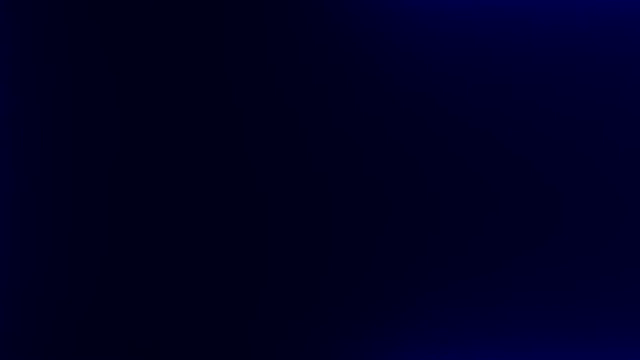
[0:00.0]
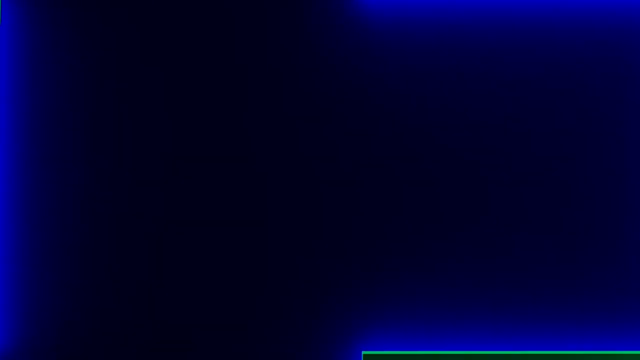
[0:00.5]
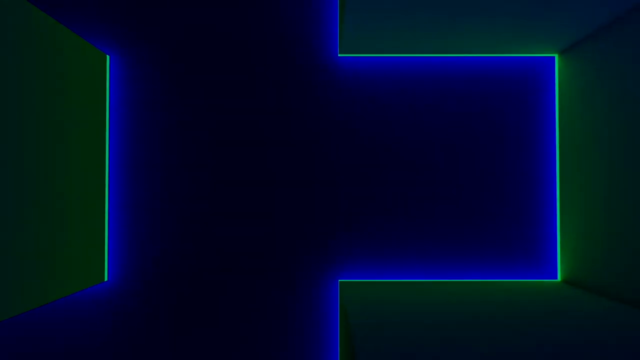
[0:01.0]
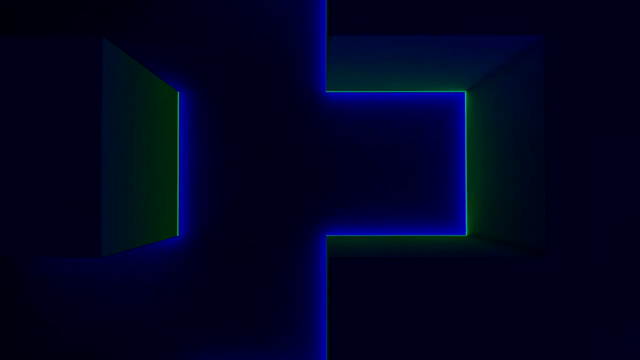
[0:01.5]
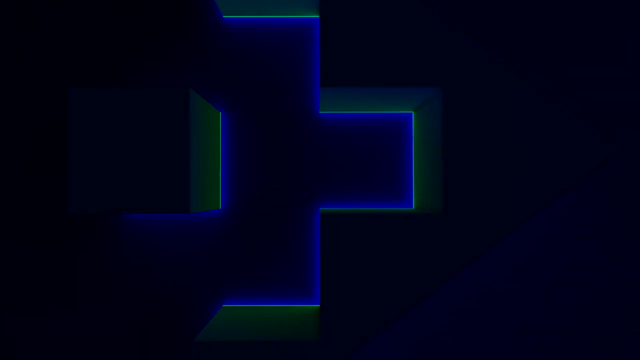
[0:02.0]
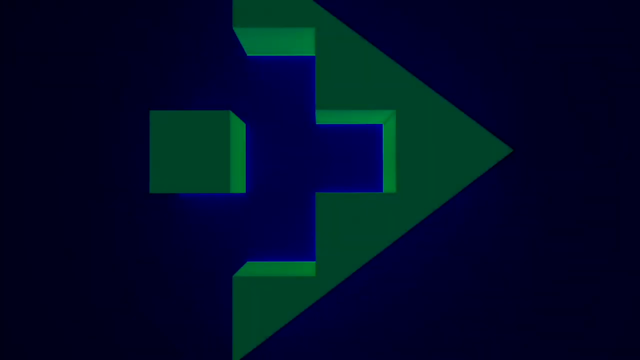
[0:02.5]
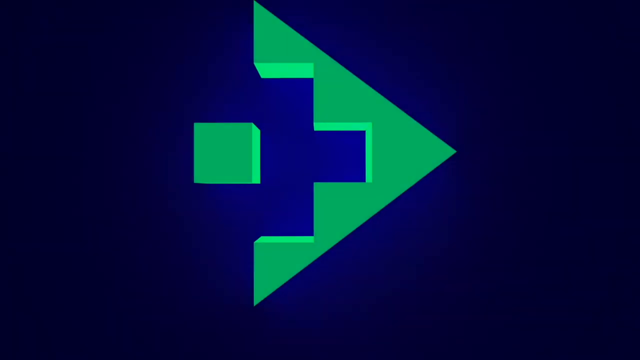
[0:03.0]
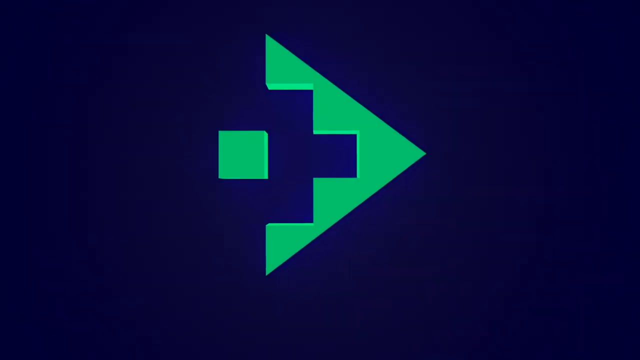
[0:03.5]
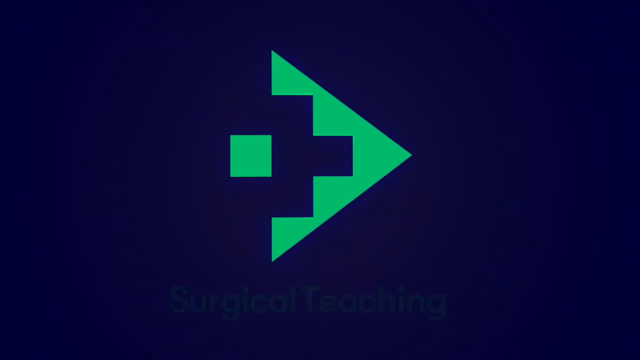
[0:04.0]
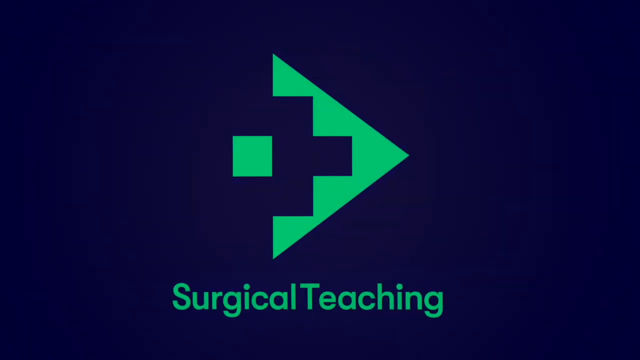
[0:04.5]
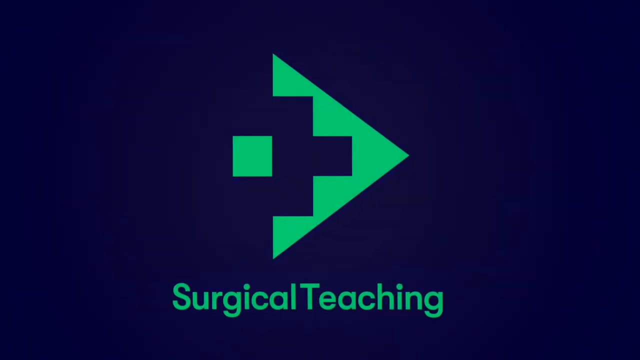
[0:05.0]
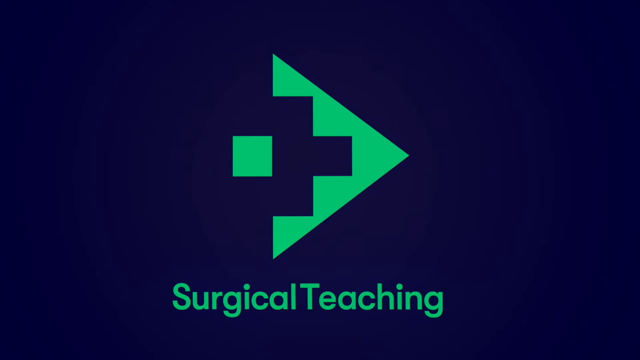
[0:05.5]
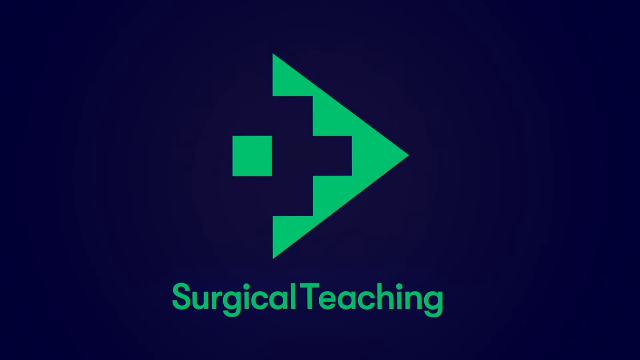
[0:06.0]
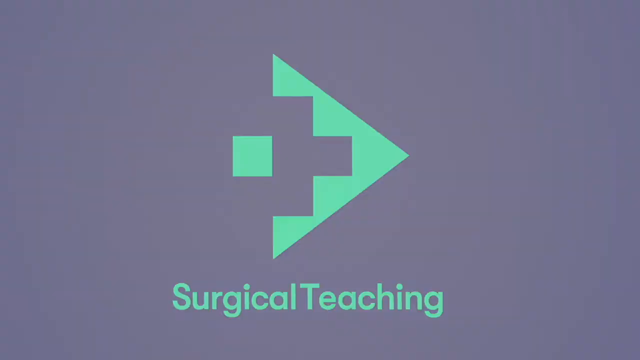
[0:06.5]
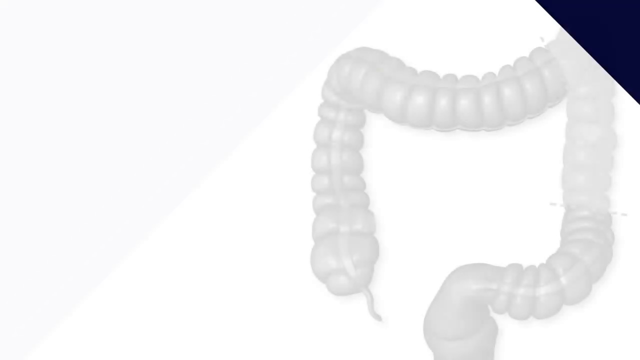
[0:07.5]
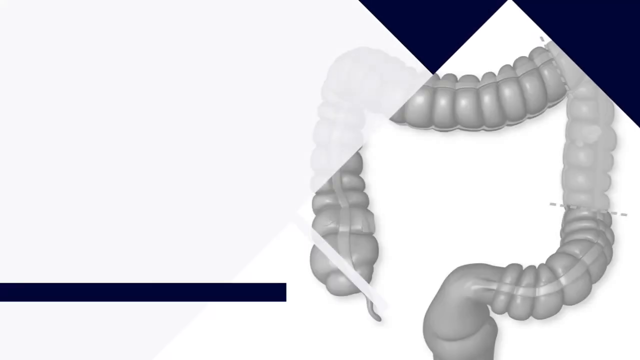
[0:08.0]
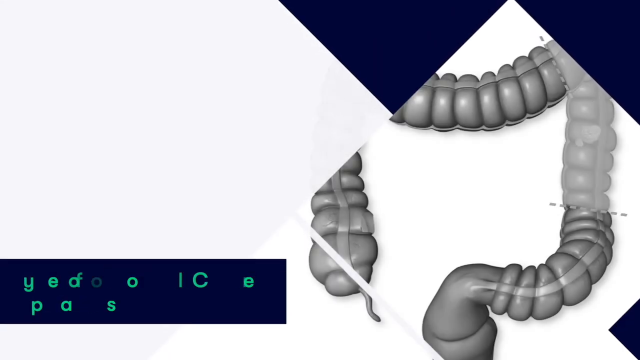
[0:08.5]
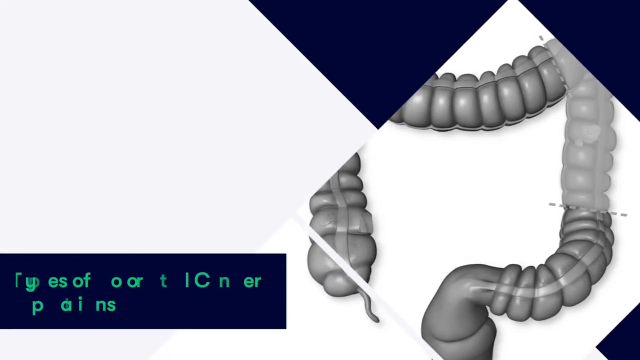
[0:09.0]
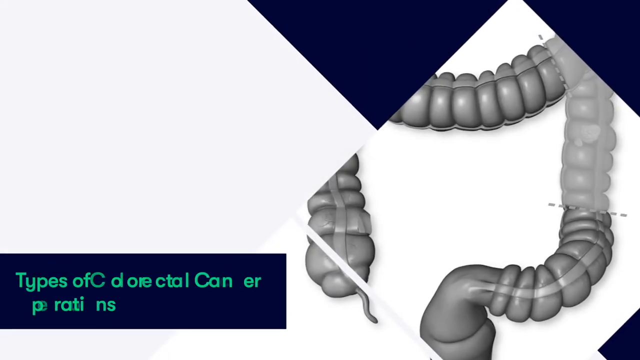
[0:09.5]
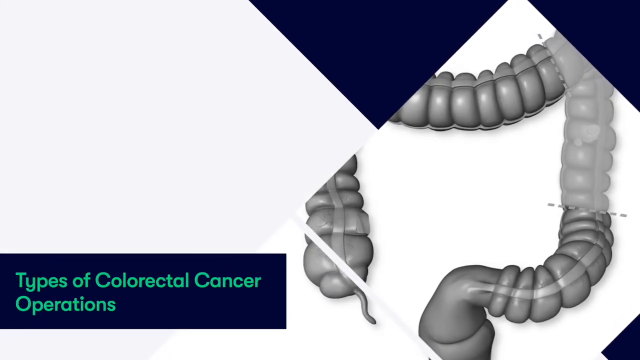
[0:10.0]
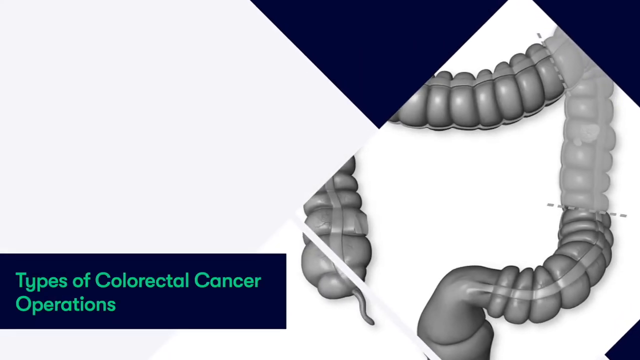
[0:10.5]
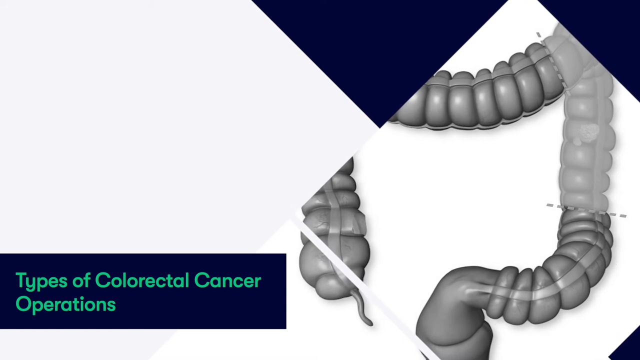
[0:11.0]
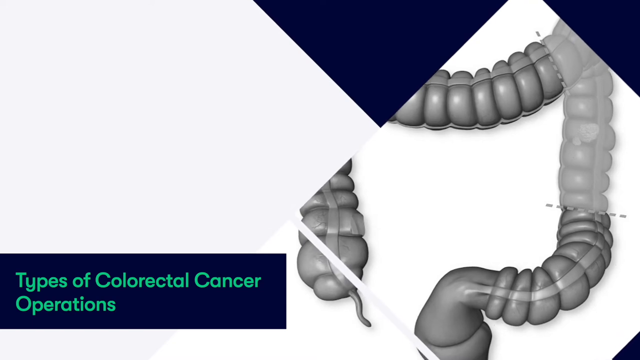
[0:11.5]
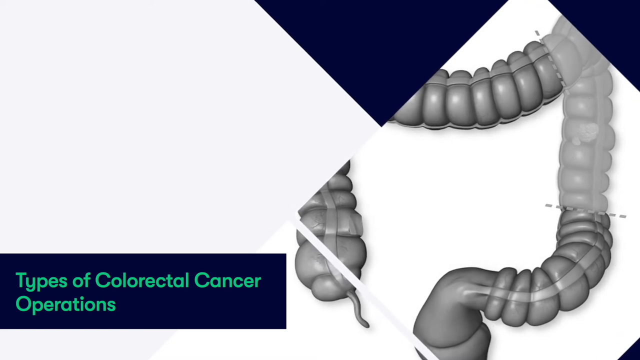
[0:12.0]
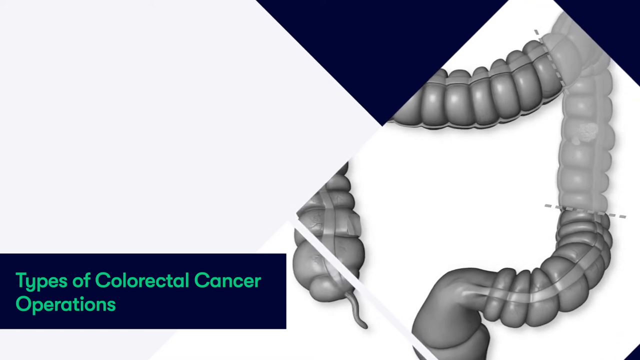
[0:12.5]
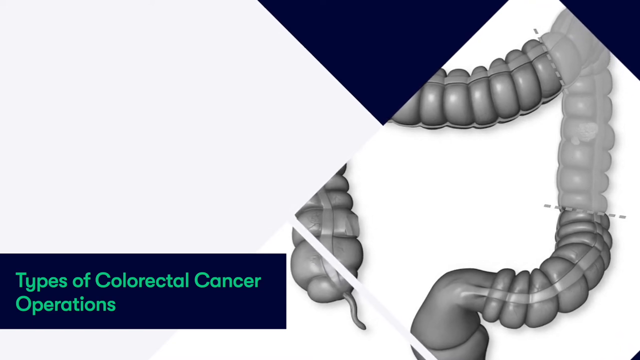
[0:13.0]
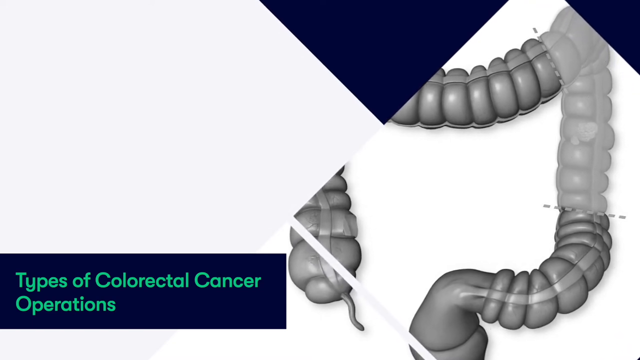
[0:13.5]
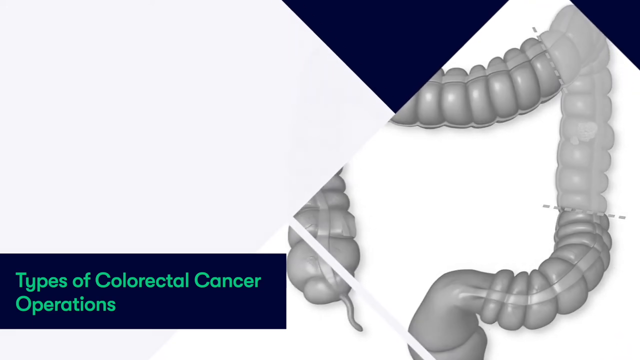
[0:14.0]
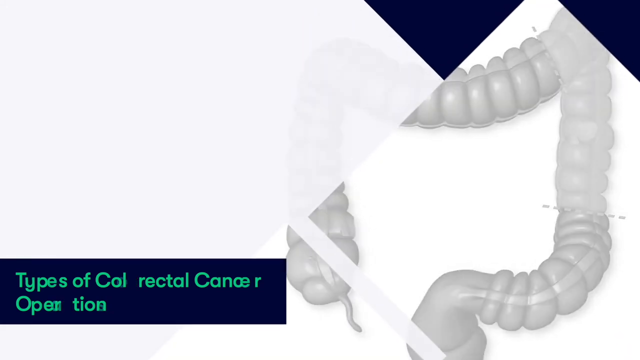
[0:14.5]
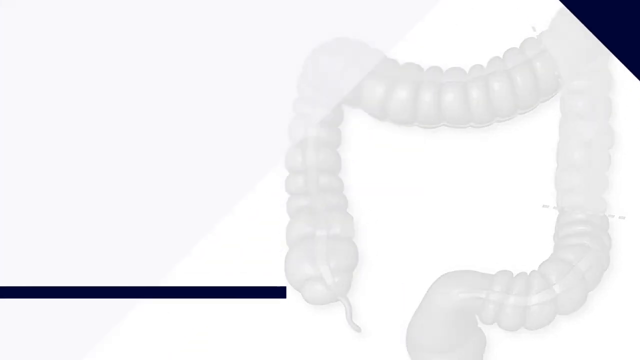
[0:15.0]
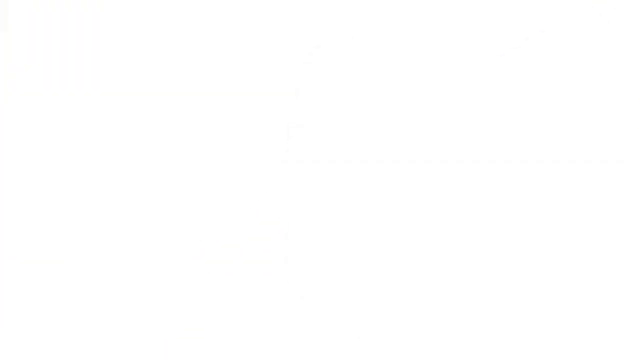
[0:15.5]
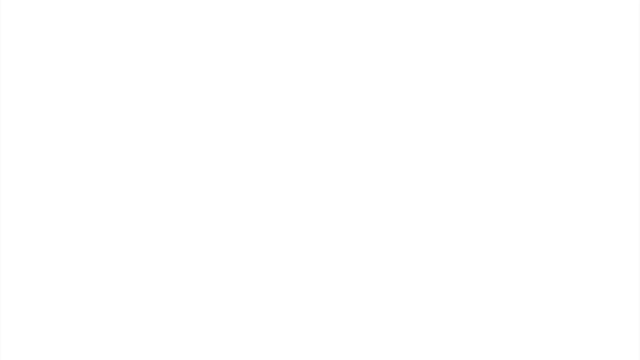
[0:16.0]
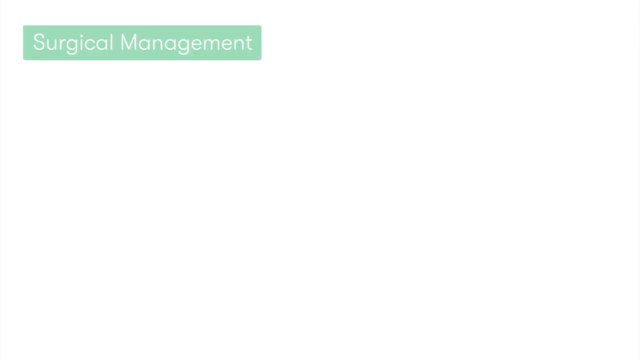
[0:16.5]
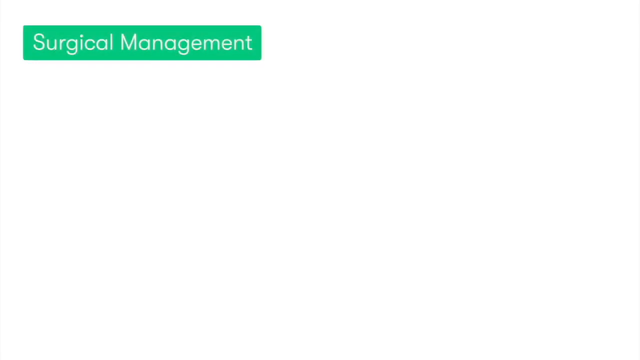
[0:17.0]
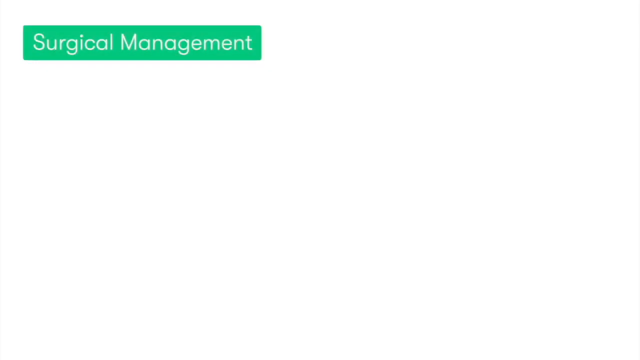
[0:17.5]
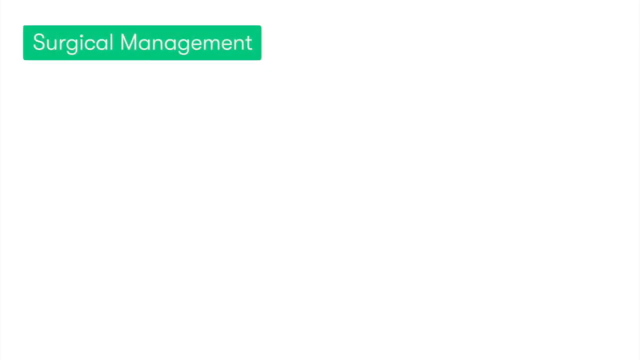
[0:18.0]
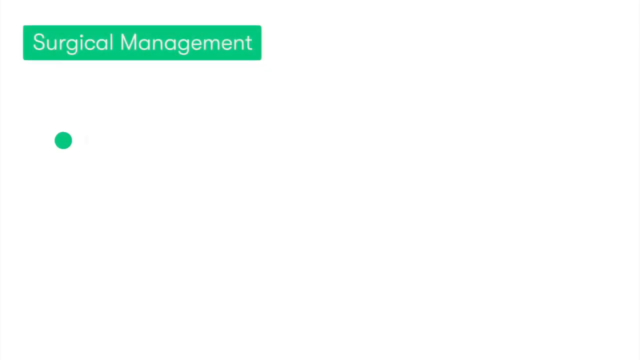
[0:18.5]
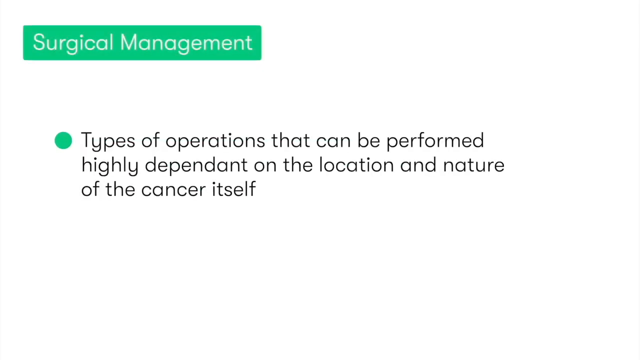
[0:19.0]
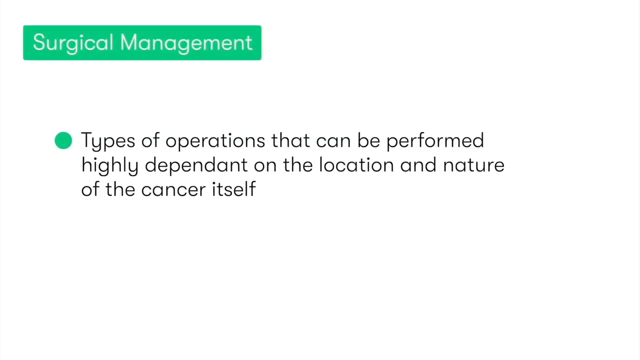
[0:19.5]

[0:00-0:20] The video opens on a black screen, then what appears to be a blue jigsaw puzzle shows up. It transforms as a green square, followed by other green shapes, appears to form what looks like an arrow logo; within the logo there is what looks like a cross, kind of like a hospital cross. Text reads "surgical teaching." Next, what looks like intestines appears on screen with the text "types of colorectal cancer operations." The screen then fades to white, and green lettering at the top reads "surgical management," followed by the text "types of operation that can be performed highly dependant on the location and nature of the cancer itself."